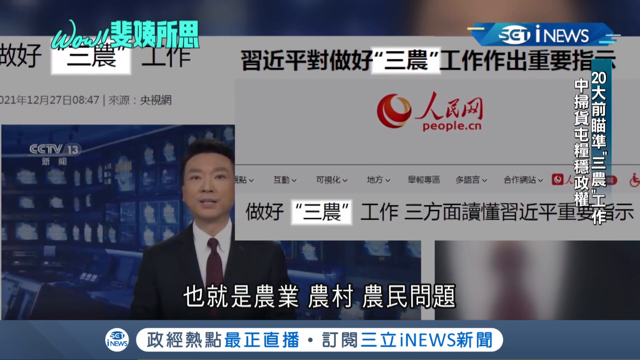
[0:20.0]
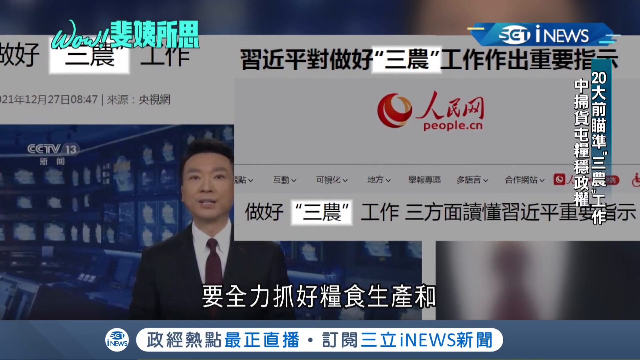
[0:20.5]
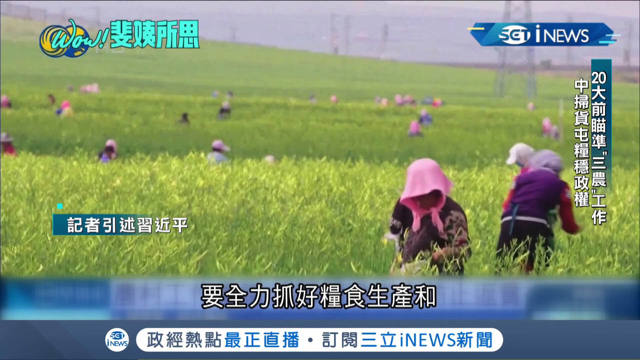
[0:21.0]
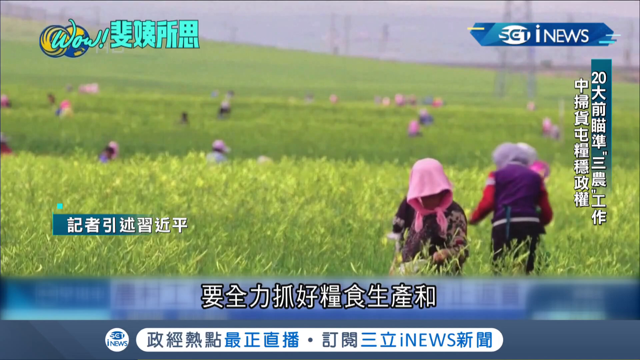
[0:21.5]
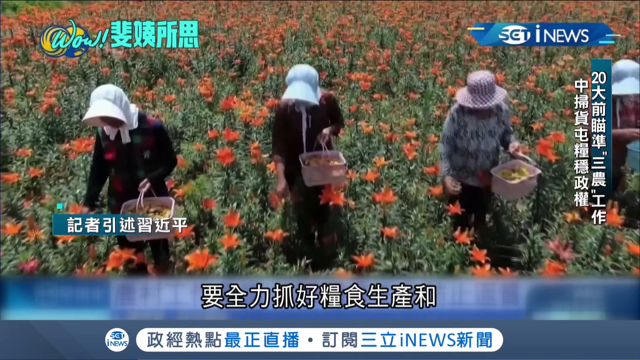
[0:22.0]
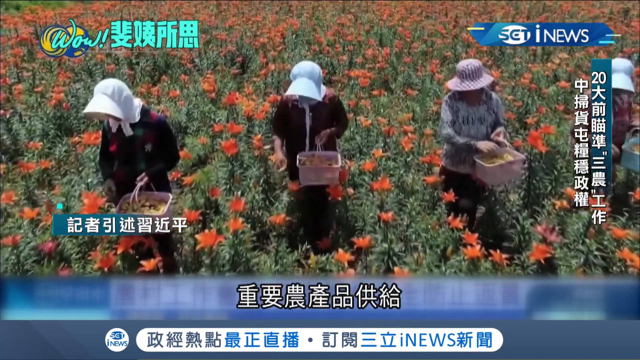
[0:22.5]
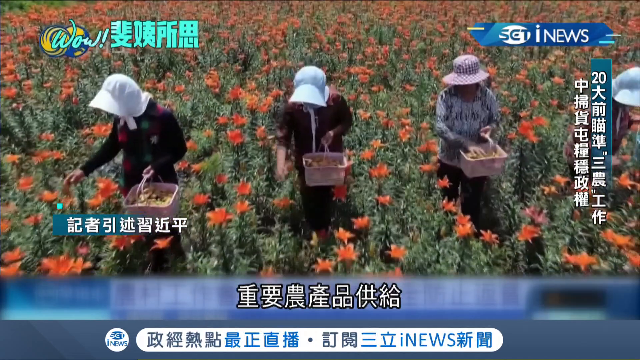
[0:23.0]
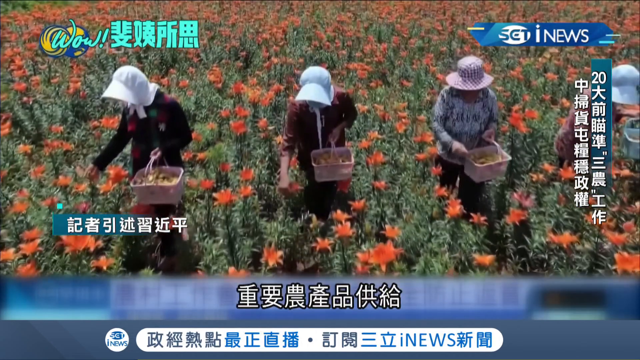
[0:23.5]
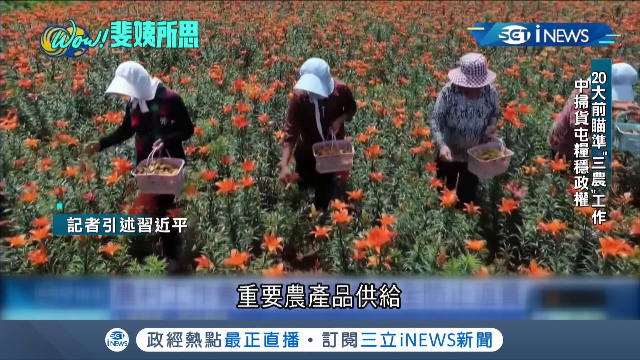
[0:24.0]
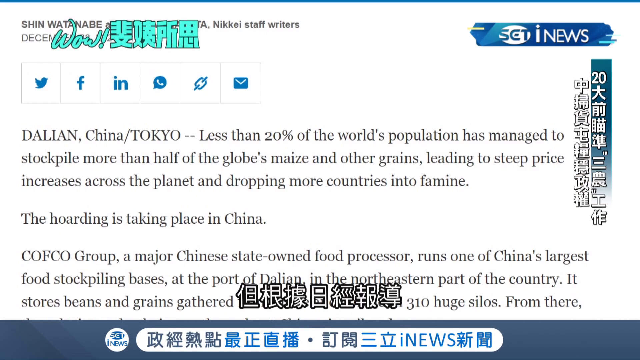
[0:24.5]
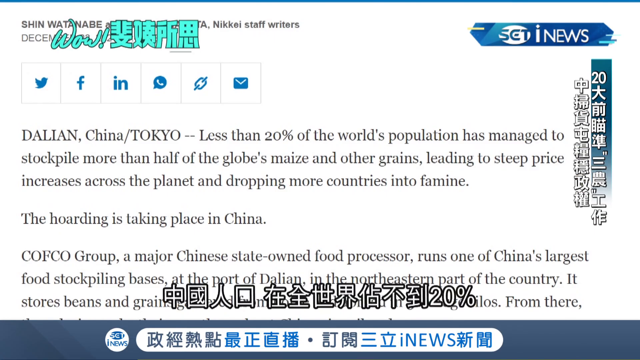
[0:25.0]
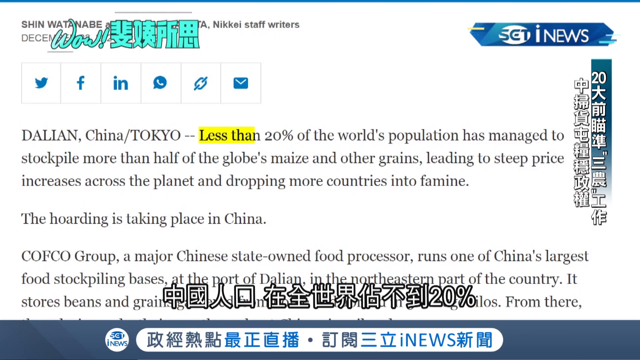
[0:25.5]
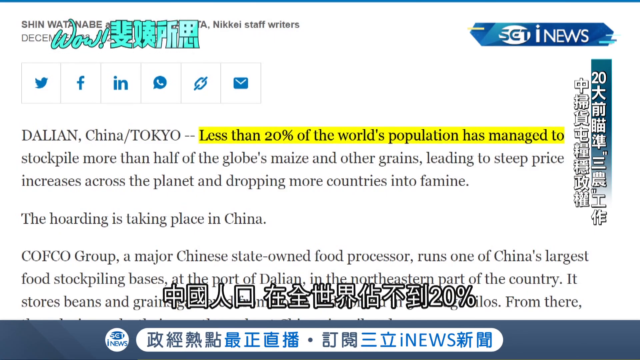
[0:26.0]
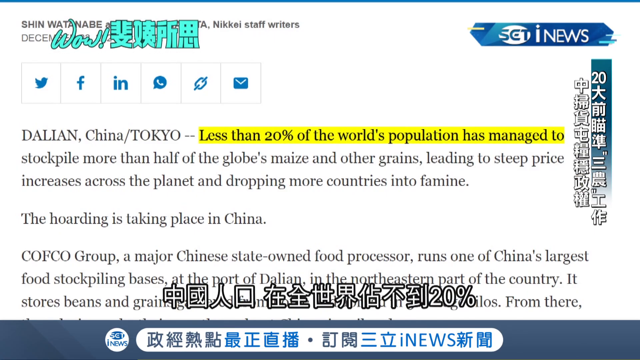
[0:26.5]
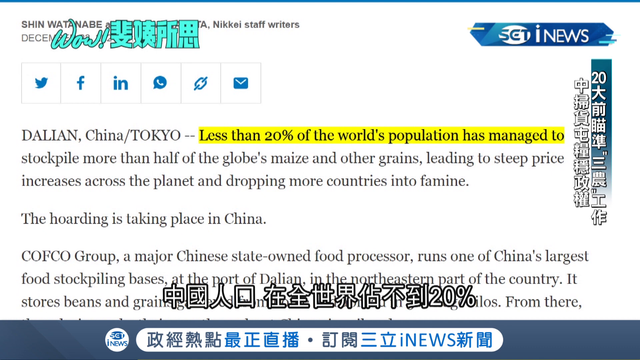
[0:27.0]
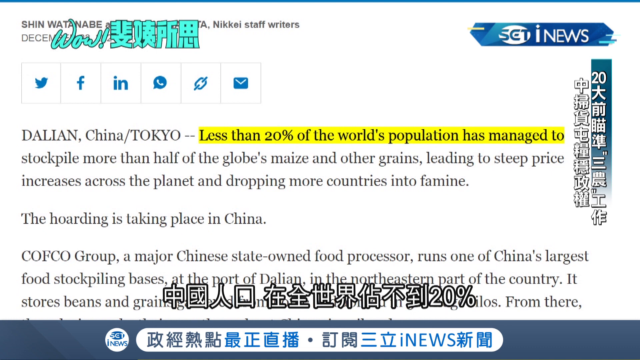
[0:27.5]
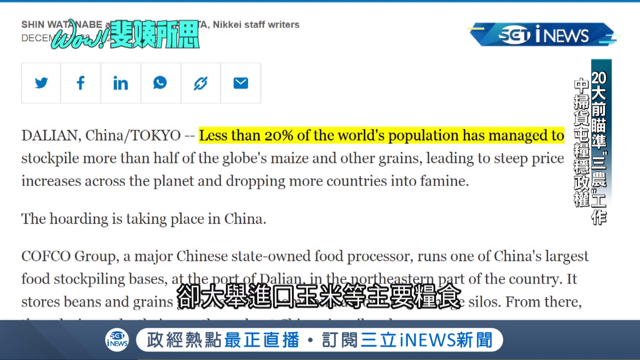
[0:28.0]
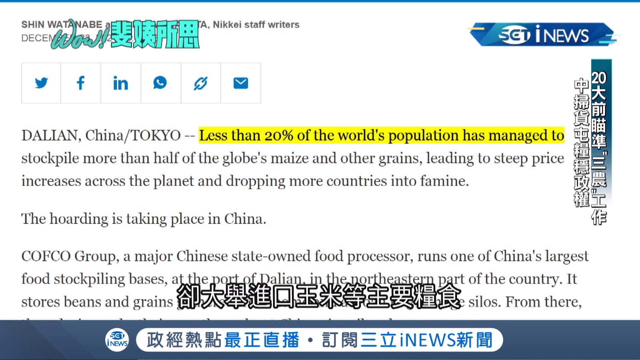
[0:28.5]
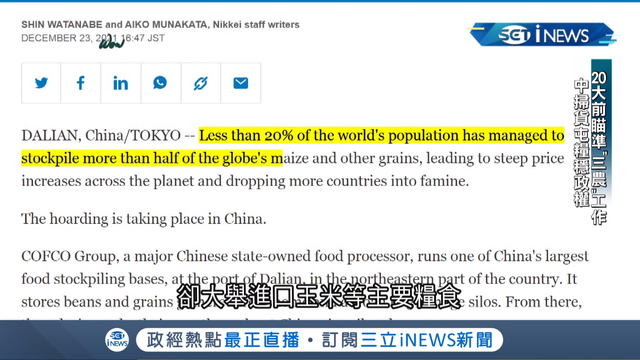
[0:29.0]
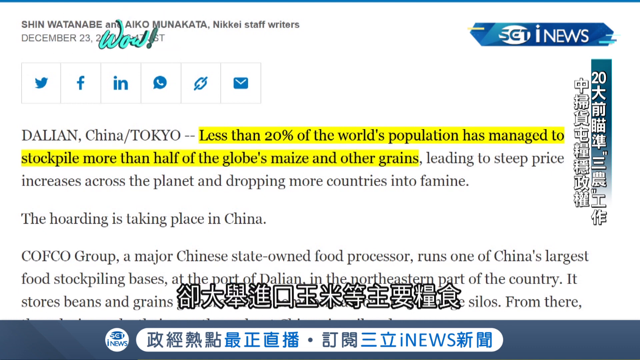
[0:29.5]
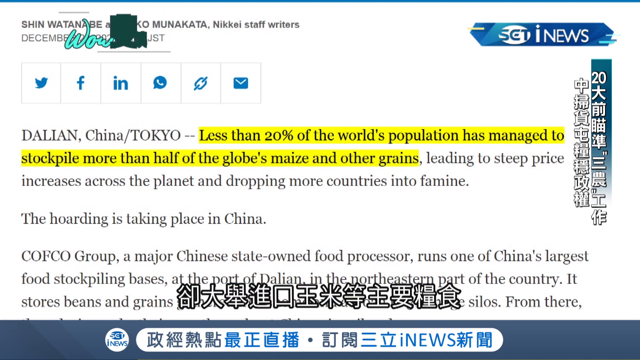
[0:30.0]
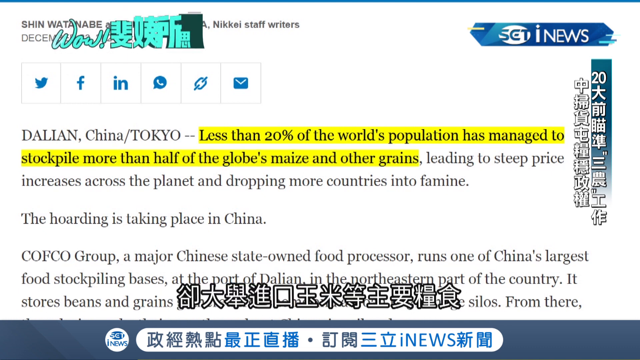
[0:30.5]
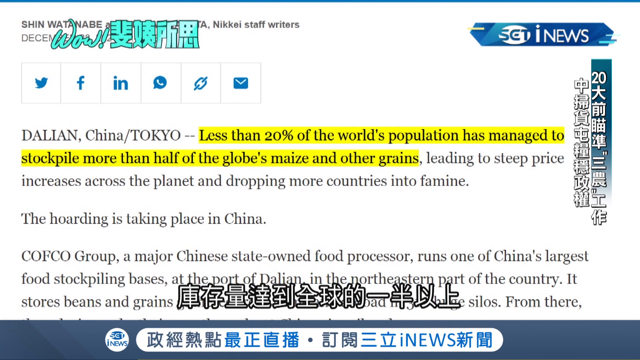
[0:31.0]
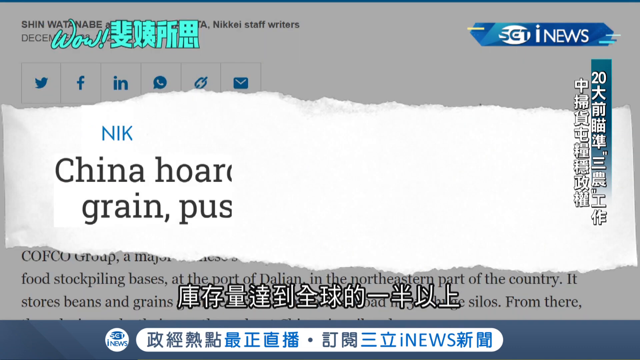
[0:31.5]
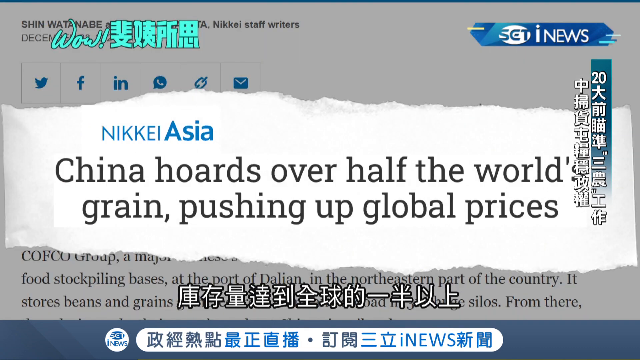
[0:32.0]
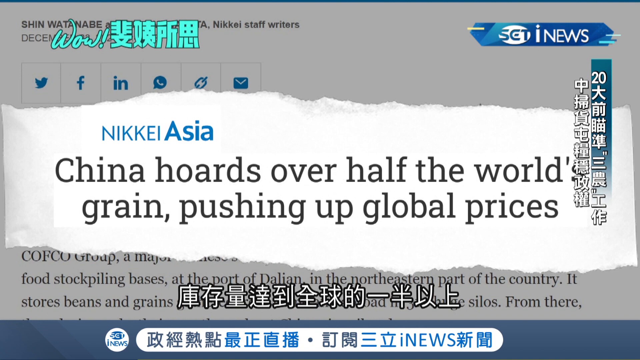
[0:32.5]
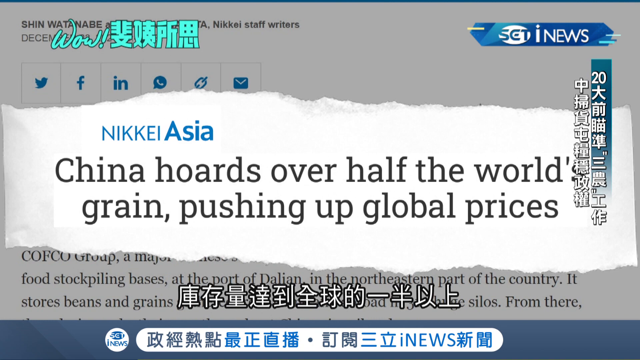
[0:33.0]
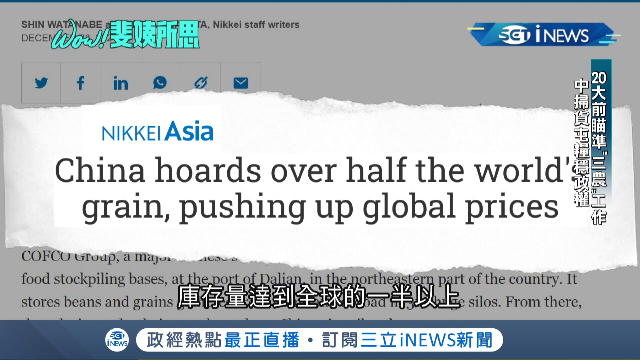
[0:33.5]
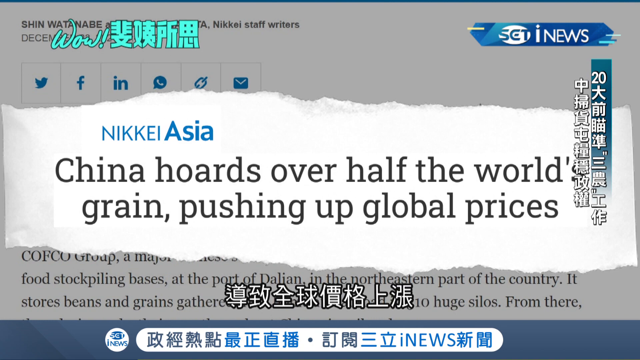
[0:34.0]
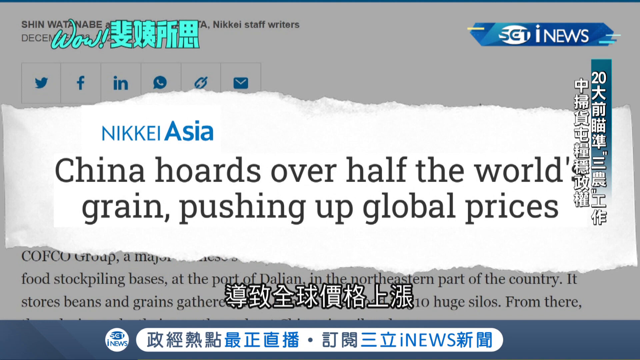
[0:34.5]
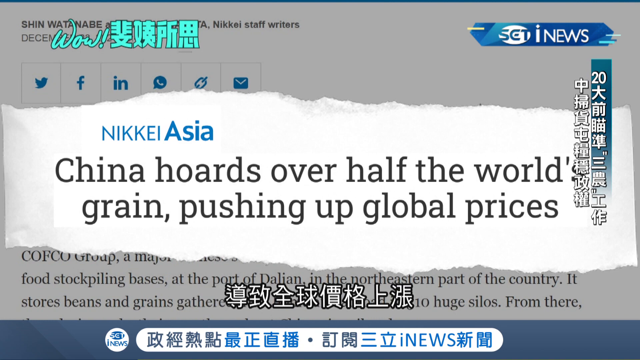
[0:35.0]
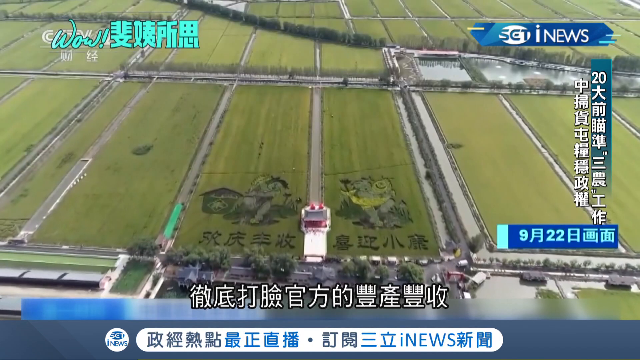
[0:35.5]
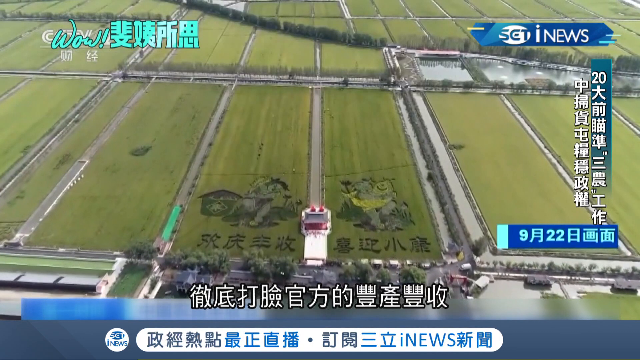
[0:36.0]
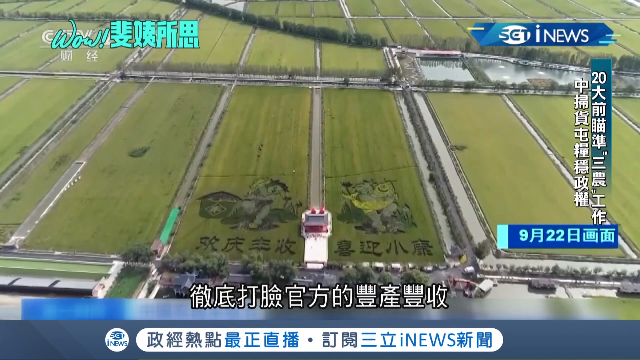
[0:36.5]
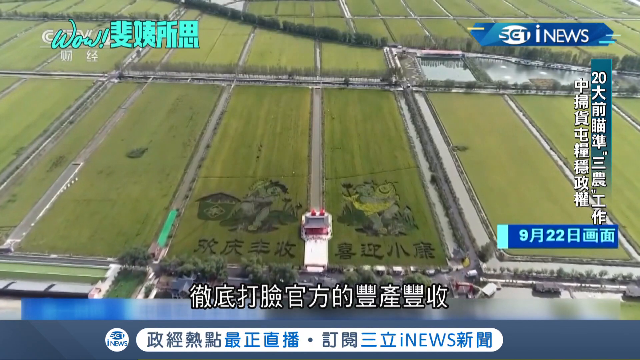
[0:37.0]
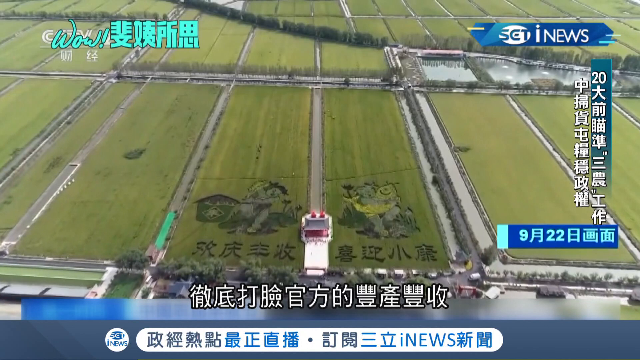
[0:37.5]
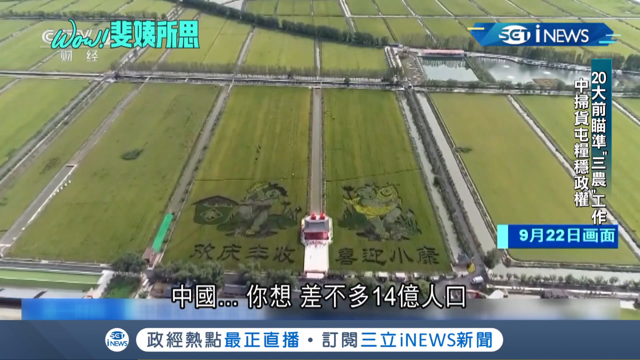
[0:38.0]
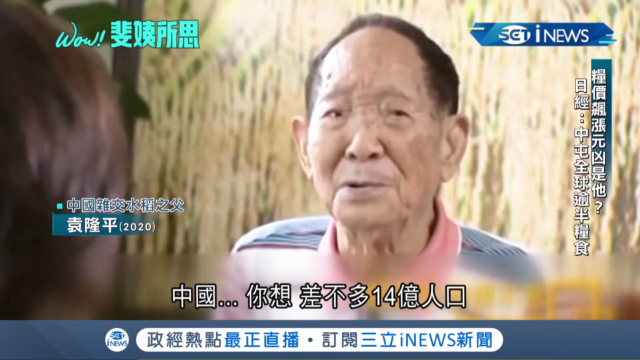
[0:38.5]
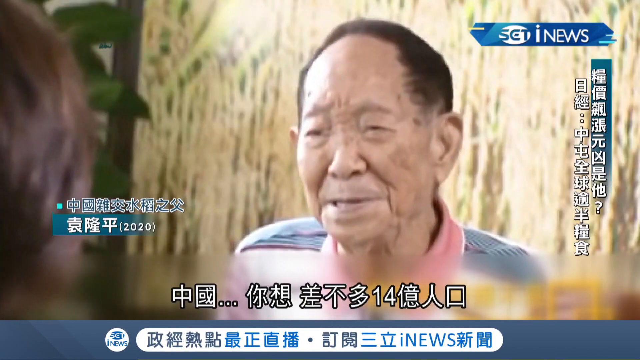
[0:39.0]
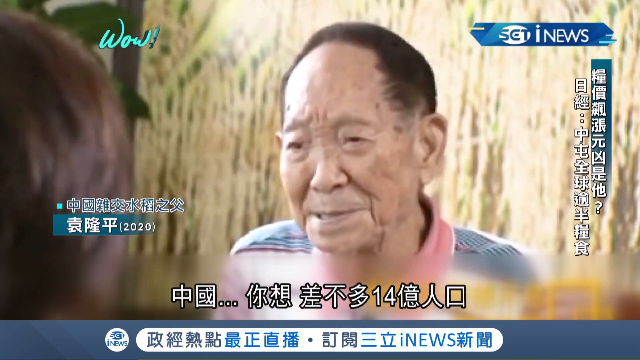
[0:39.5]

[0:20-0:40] A group of women out in the fields pick fruit or flowers from a garden and put them into baskets they are holding. An online news article appears, with one section highlighted that reads "less than 20% of the world's population has managed to stockpile more than half of the globe's maize and other grains." A statement is then presented in the center: "China hoards over half the world's grain pushing up global prices." A zoomed-out aerial view shows a Chinese farm among many farms; at the bottom, one farm has crops pressed down to form two pictures that look like people, along with some Chinese characters. The scene then shows an elderly man speaking.